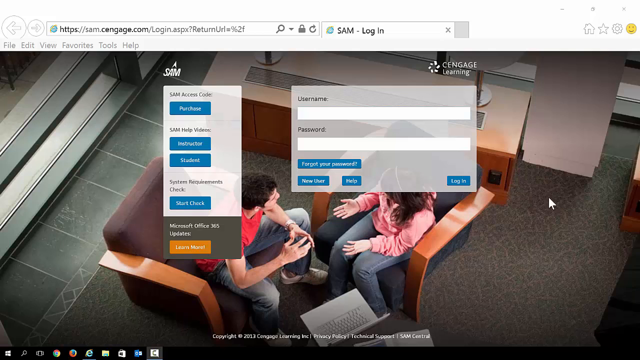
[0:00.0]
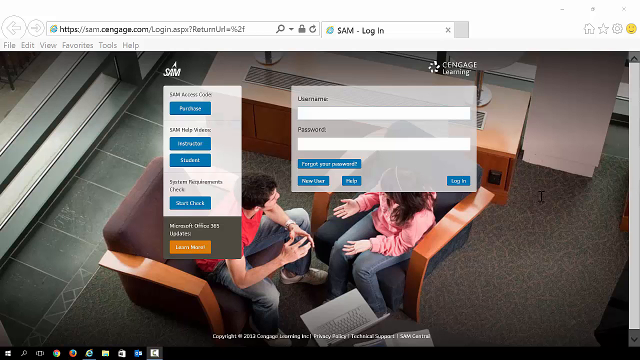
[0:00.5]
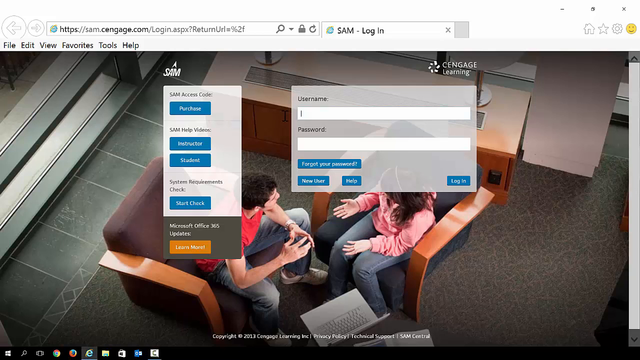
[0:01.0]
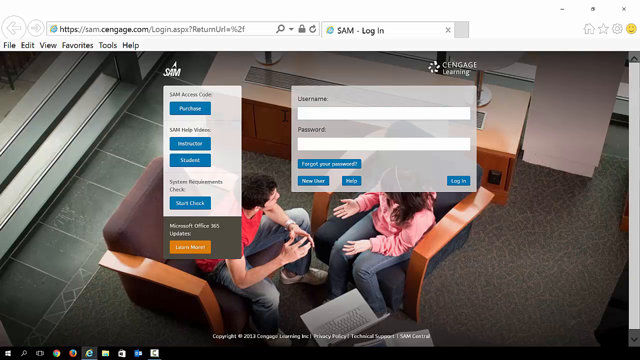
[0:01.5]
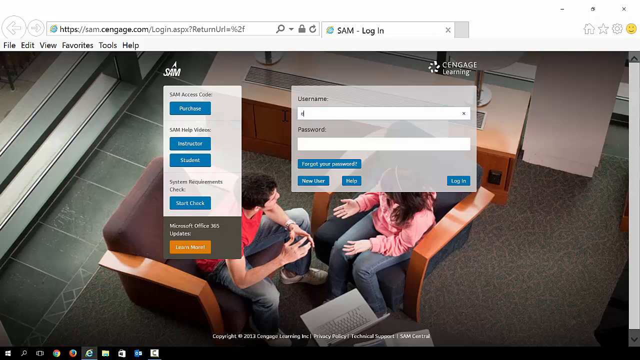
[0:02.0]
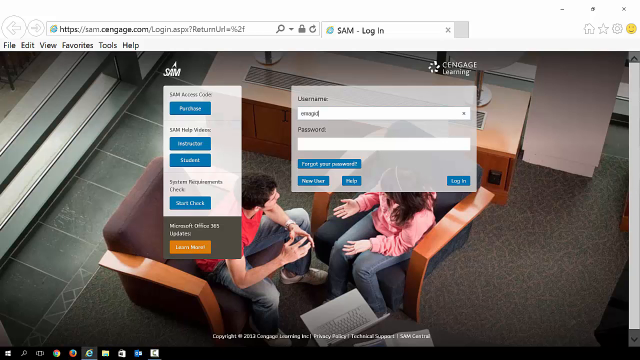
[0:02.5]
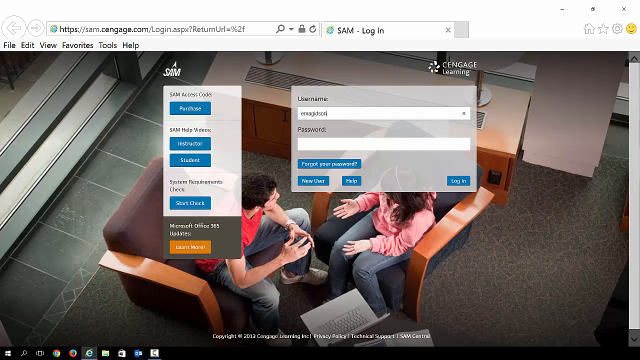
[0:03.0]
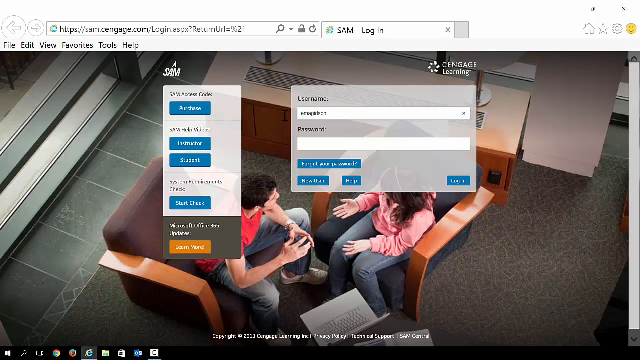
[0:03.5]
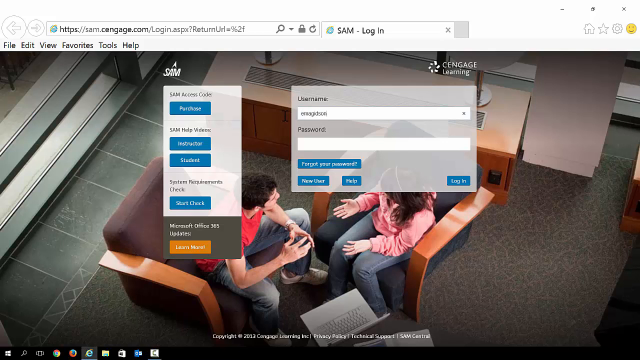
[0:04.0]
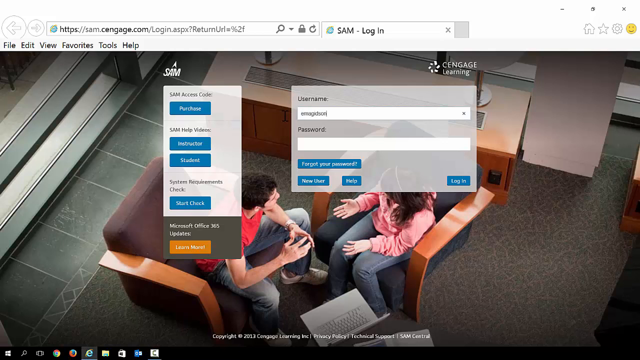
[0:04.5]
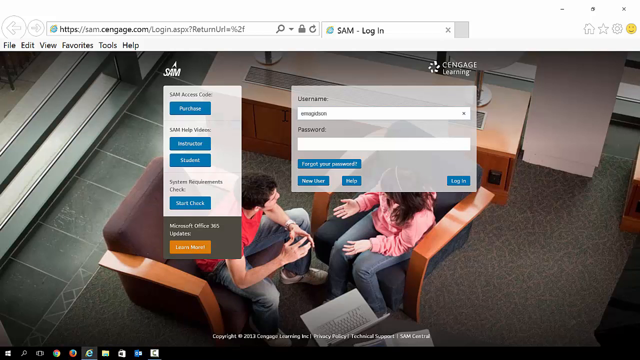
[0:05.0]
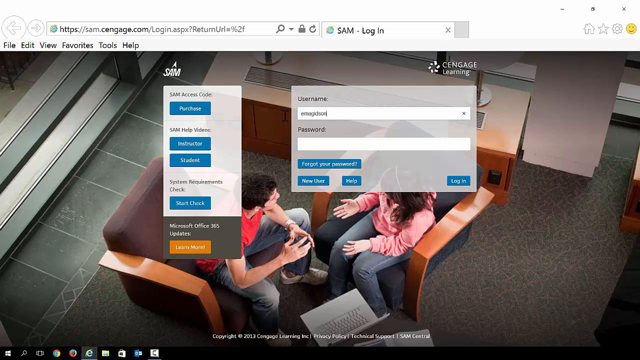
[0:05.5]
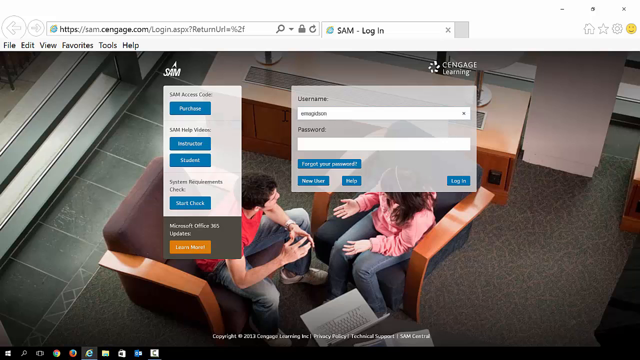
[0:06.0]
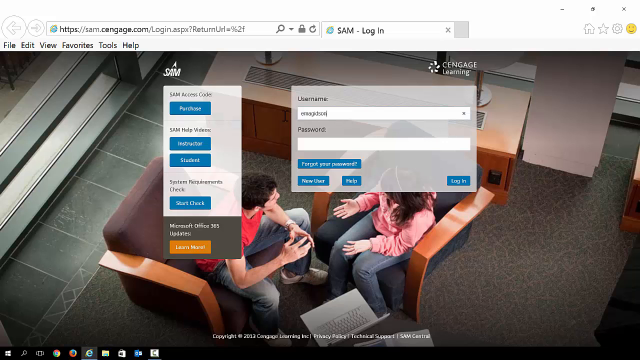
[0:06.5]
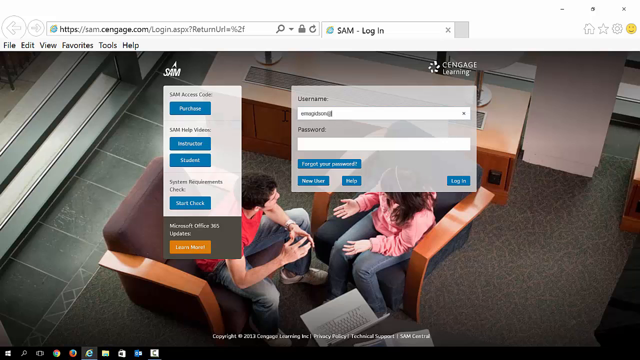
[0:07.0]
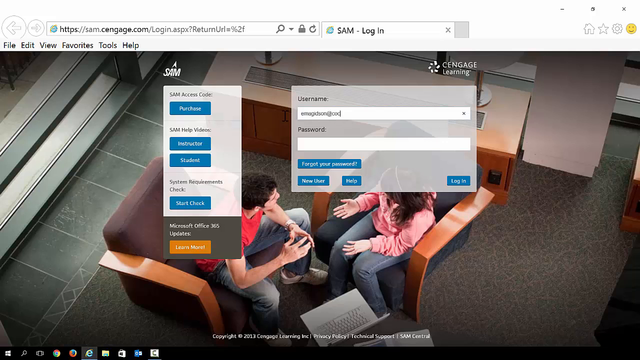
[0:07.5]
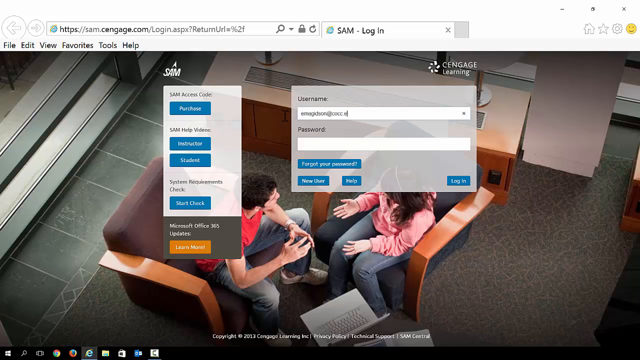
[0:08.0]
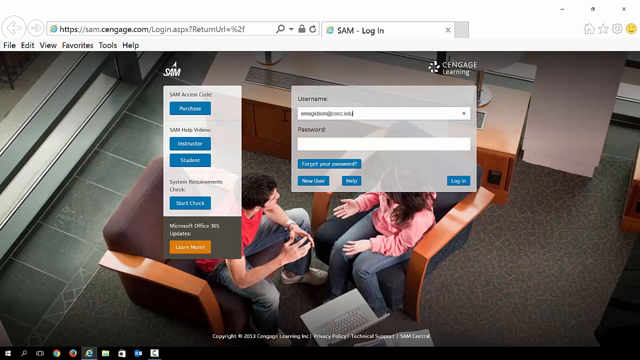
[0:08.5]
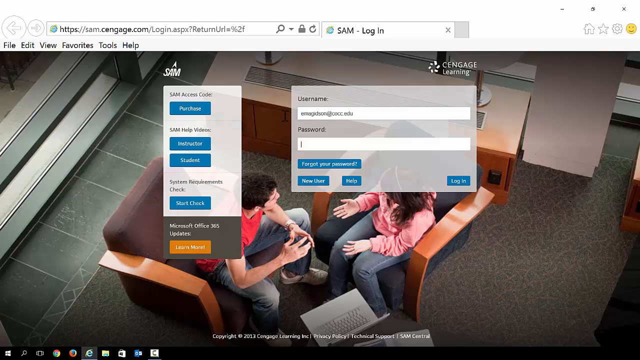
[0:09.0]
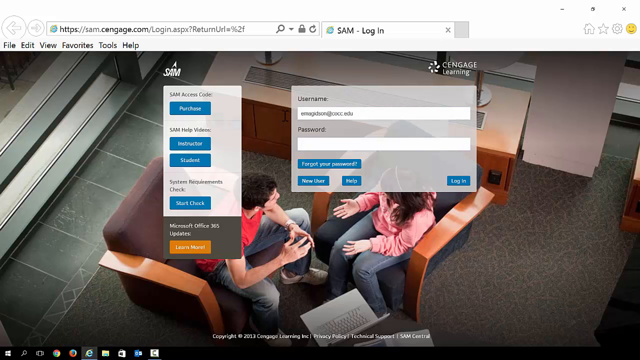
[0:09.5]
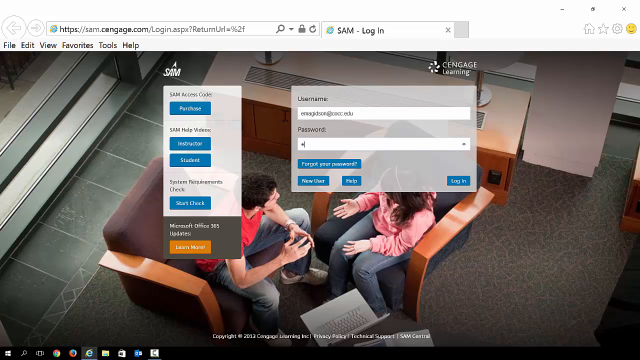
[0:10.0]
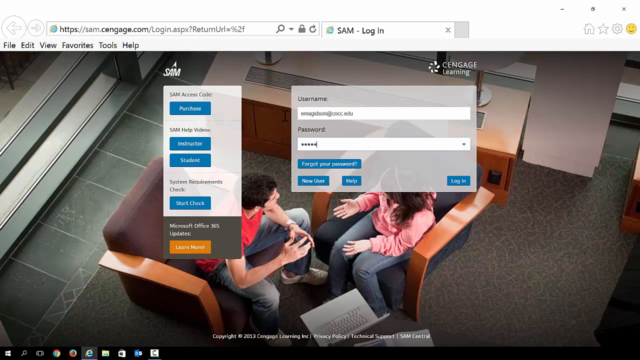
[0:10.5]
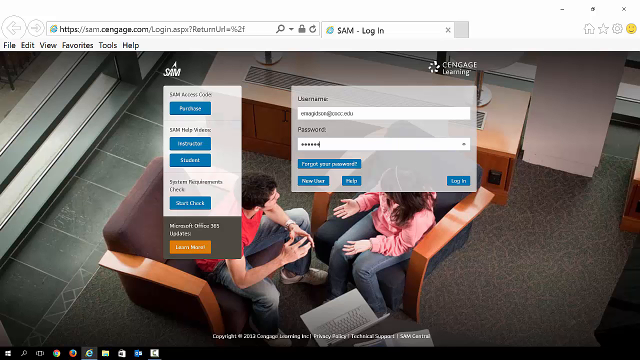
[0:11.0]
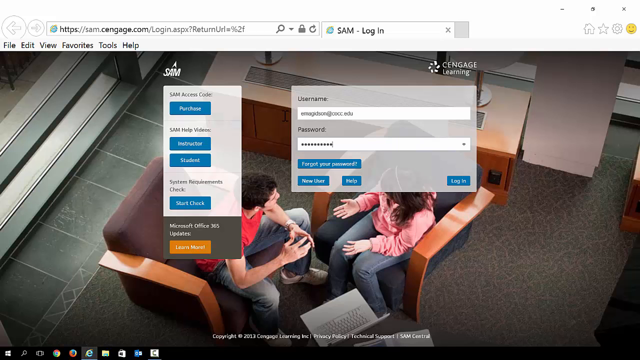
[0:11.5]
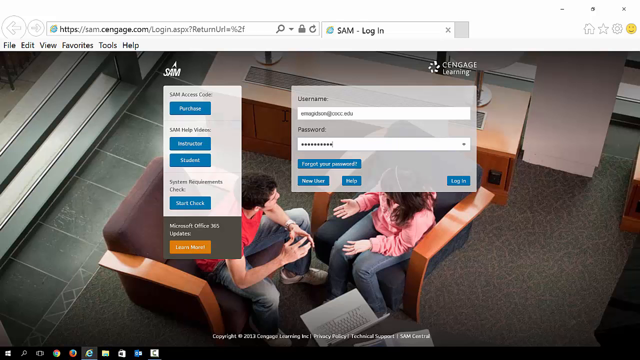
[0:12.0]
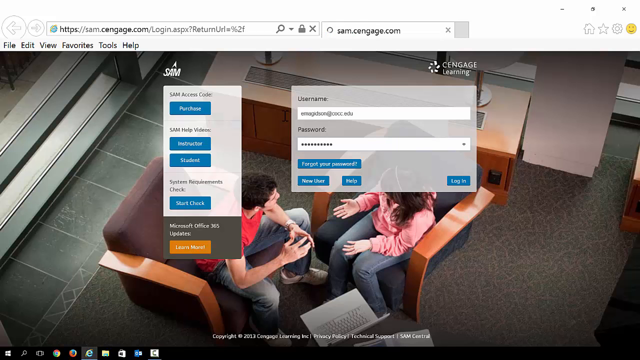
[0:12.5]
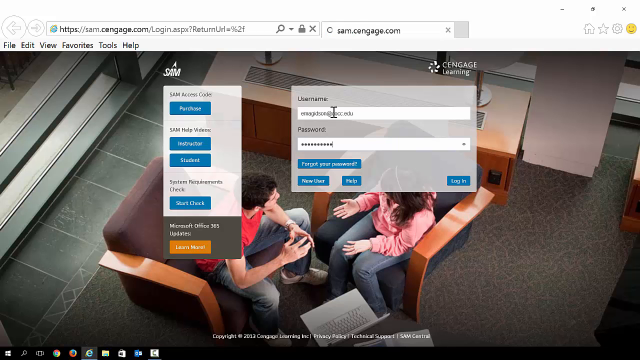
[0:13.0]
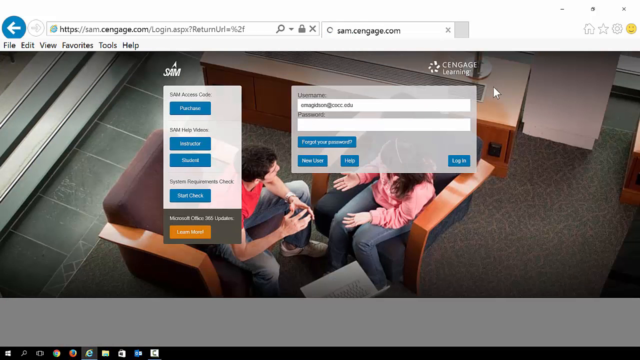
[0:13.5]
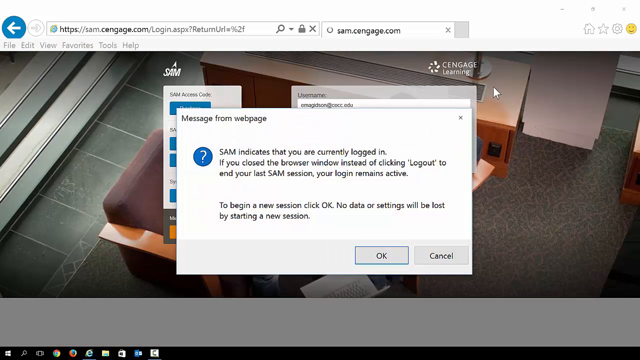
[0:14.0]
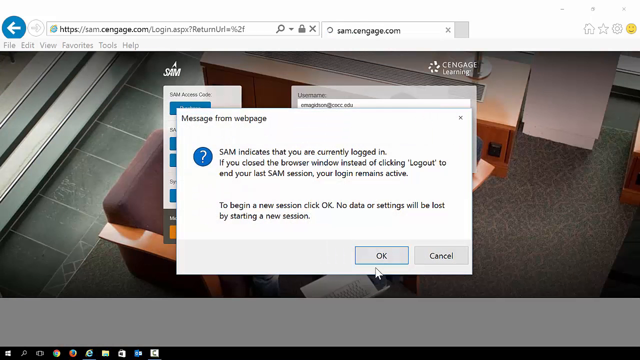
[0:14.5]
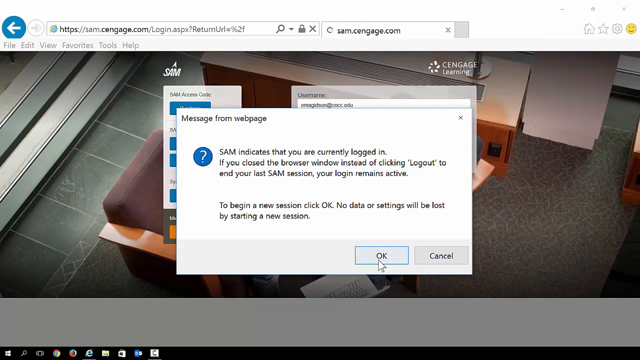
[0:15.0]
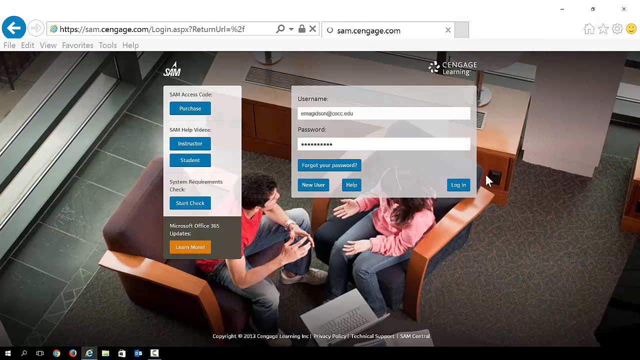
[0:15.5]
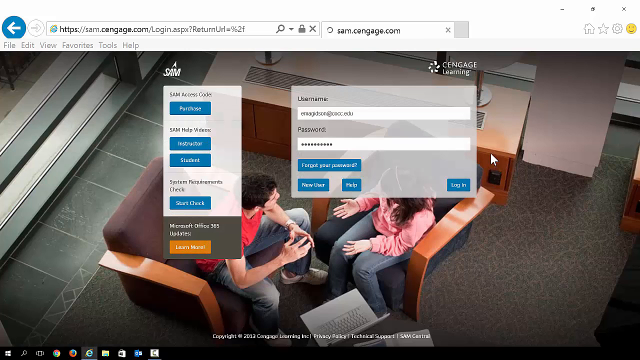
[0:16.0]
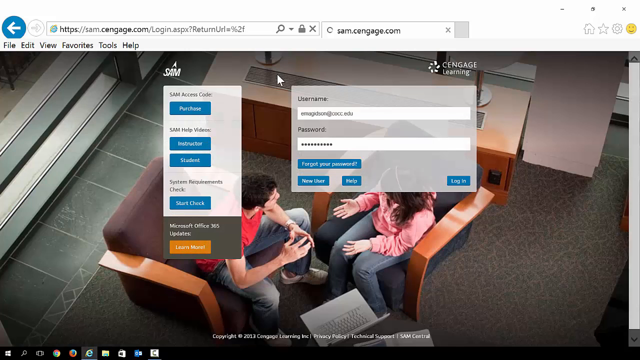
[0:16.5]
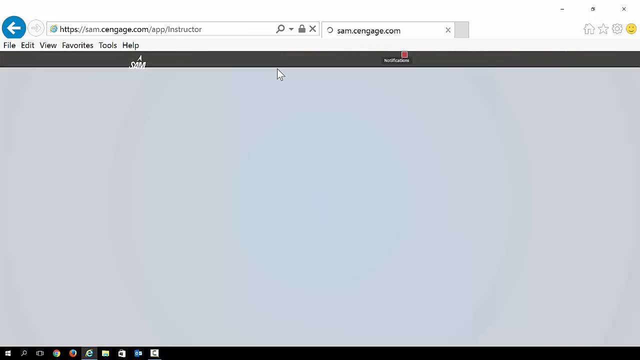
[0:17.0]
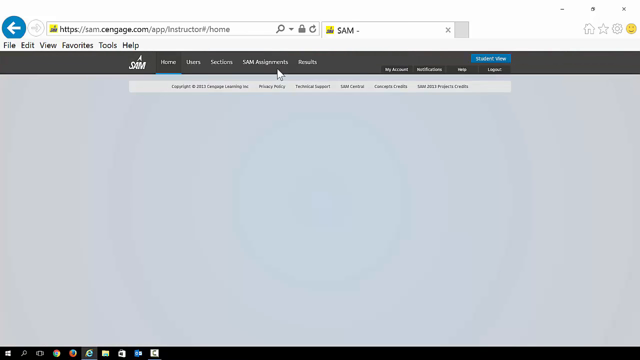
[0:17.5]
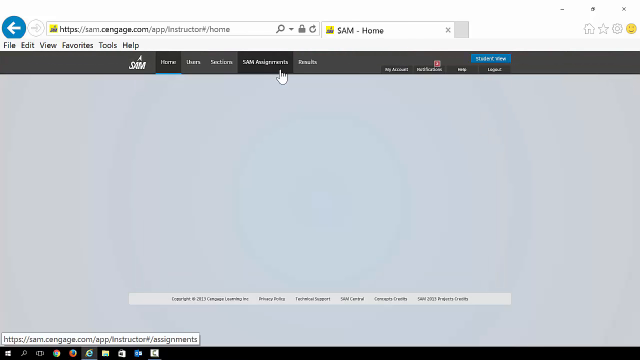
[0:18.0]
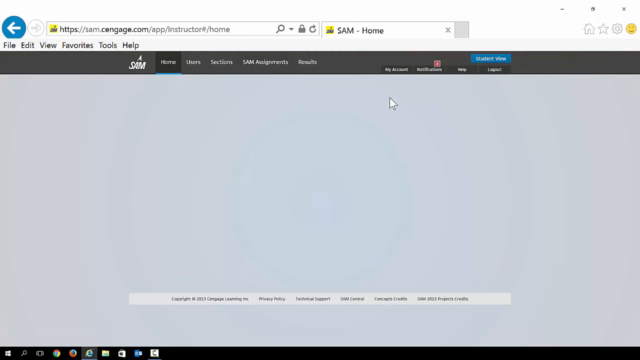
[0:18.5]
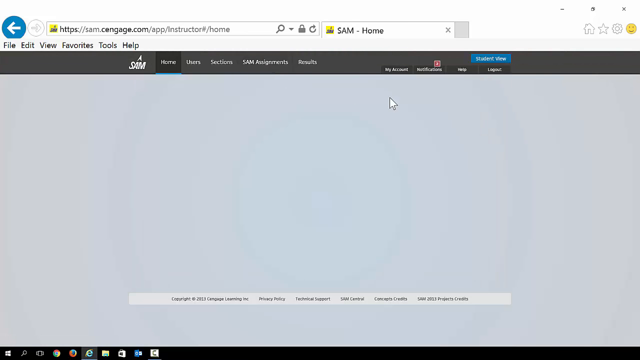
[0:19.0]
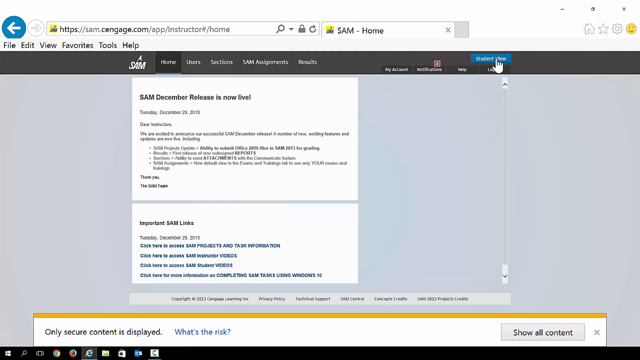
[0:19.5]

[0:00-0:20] The video is a recording of a website, with a search bar in the upper part of the screen. In the first seconds there are frames with a semi-transparent background; the one on the right contains empty fields that get filled in: the username field in the upper part, and the password entered in the lower part. A rectangular window then appears with a white background and black inscriptions inside. The arrow cursor moves onto the OK button in the lower part of this window. The homepage of a website is then shown. At the top is a menu whose white items are placed next to each other horizontally. One item is highlighted: it is still white, but its background is slightly darker and there is a blue line beneath it.